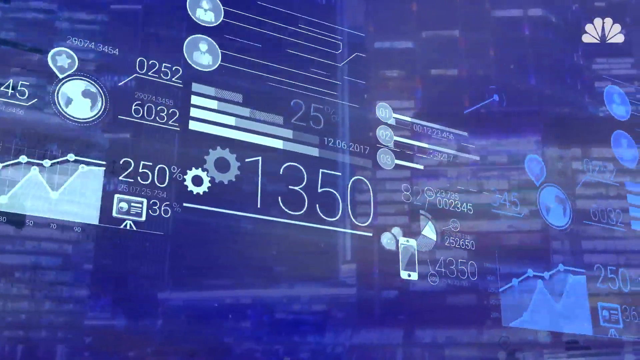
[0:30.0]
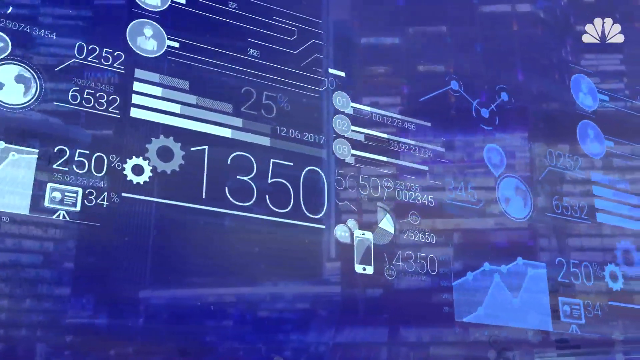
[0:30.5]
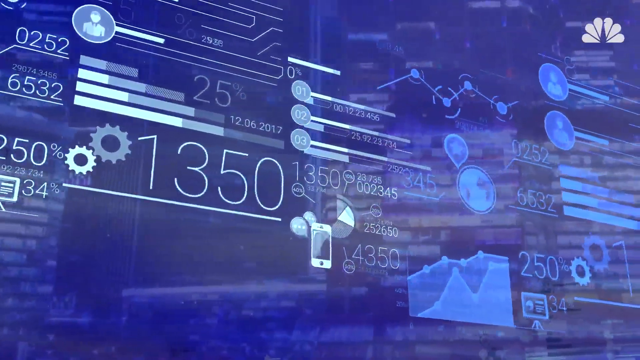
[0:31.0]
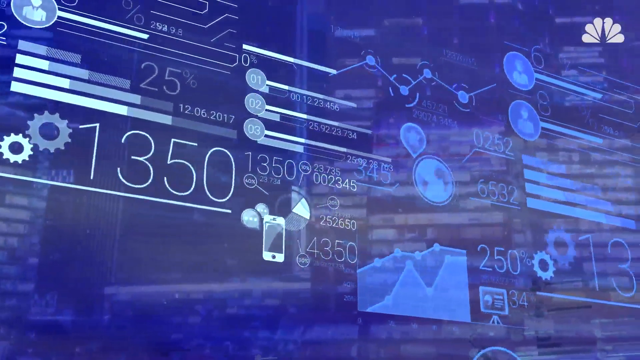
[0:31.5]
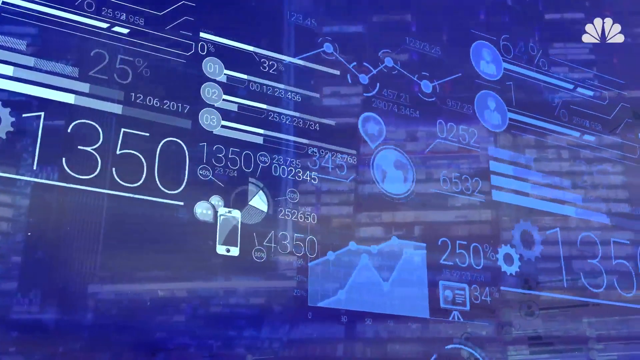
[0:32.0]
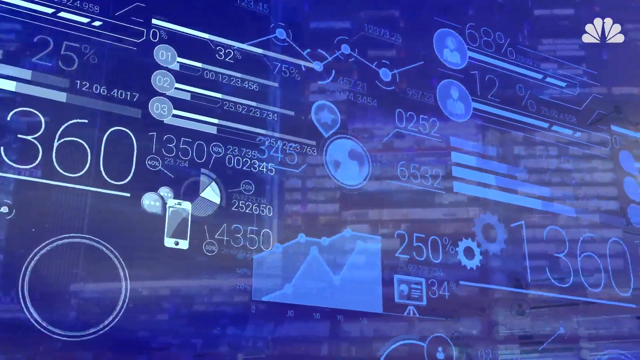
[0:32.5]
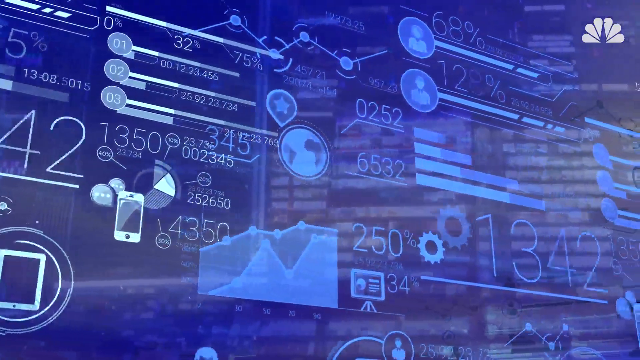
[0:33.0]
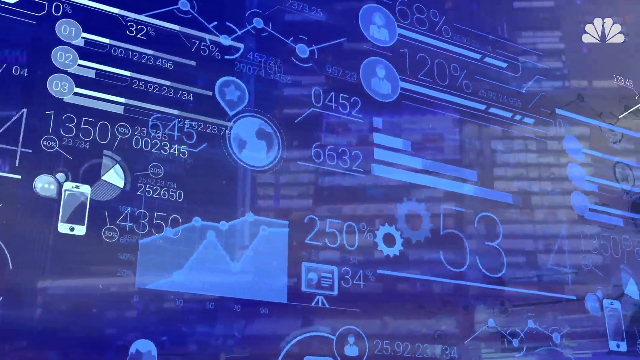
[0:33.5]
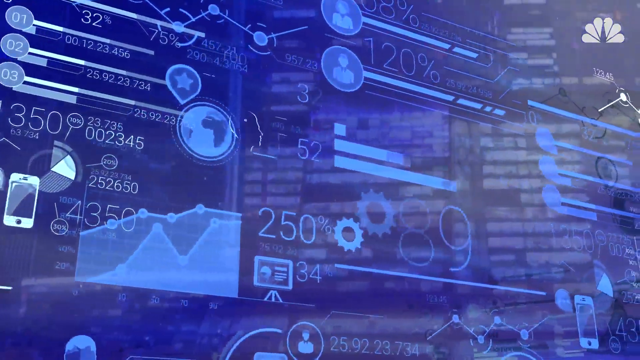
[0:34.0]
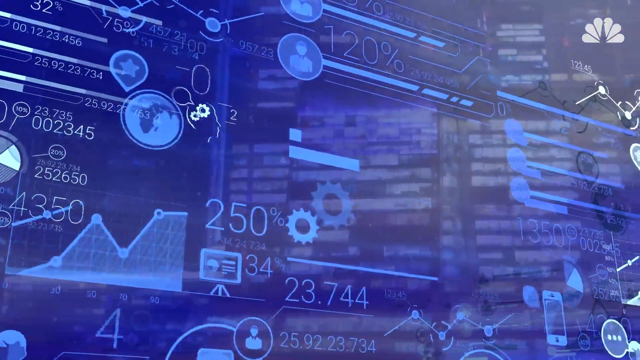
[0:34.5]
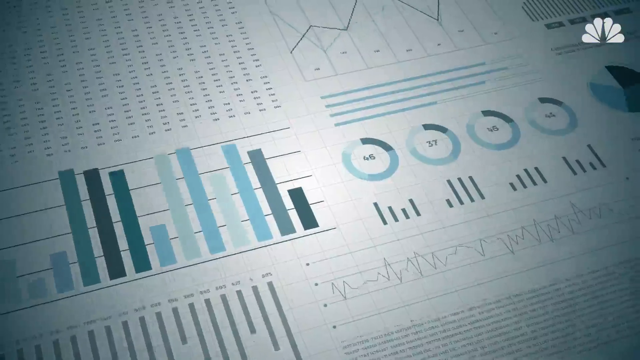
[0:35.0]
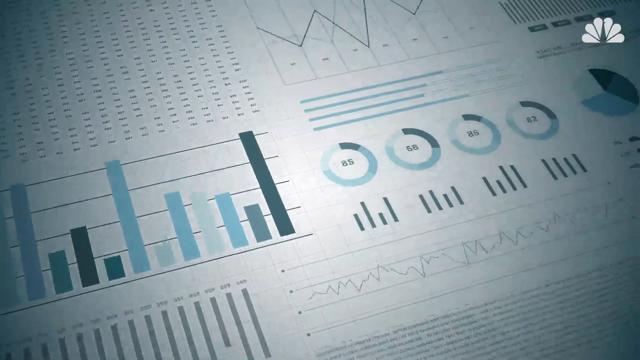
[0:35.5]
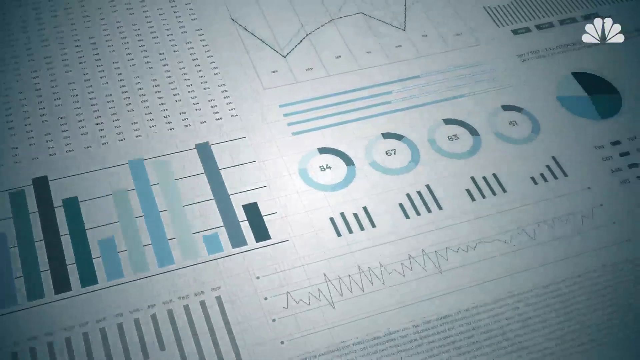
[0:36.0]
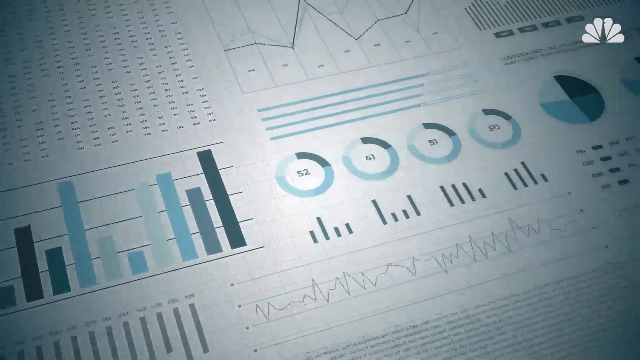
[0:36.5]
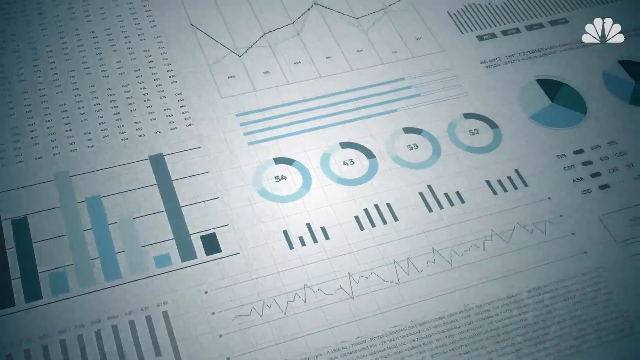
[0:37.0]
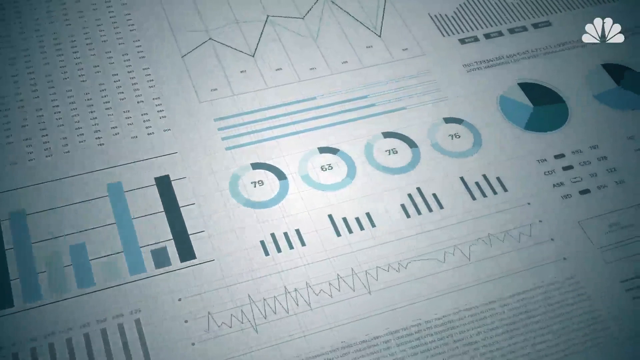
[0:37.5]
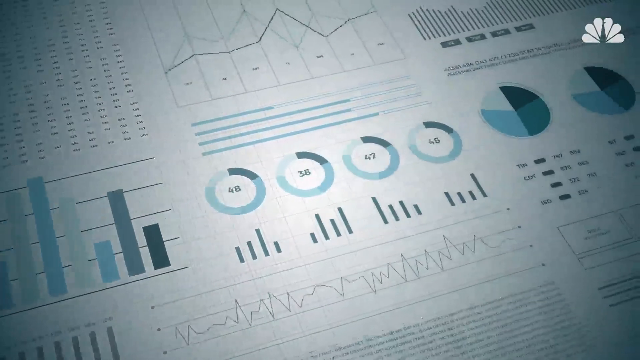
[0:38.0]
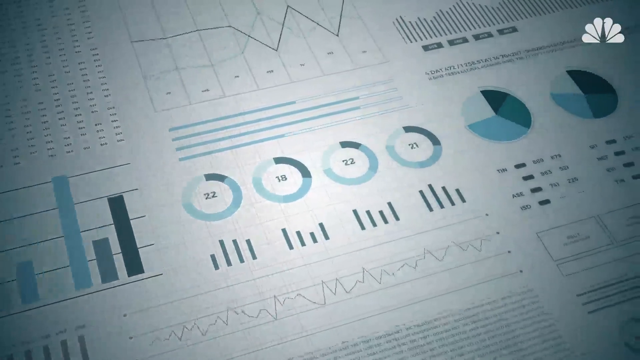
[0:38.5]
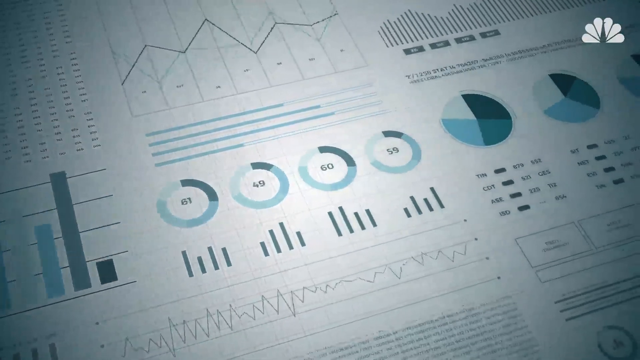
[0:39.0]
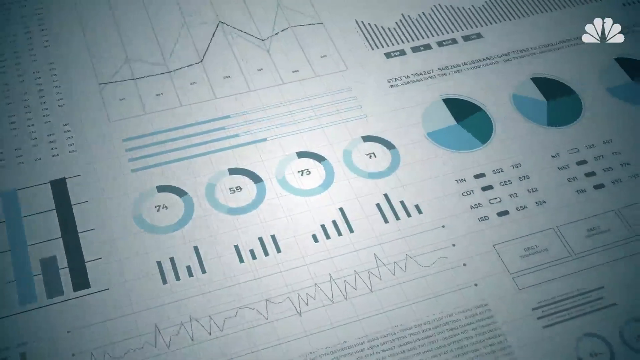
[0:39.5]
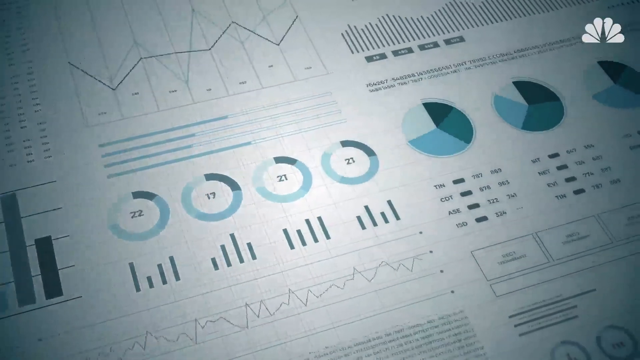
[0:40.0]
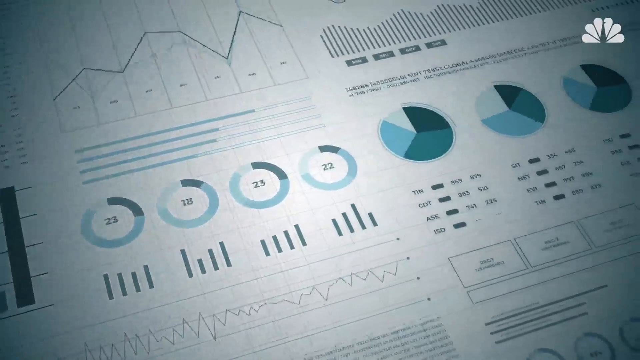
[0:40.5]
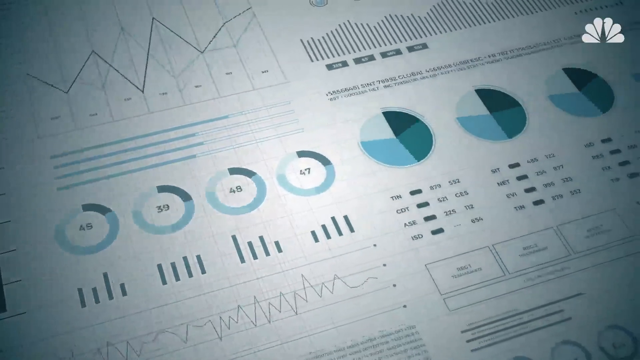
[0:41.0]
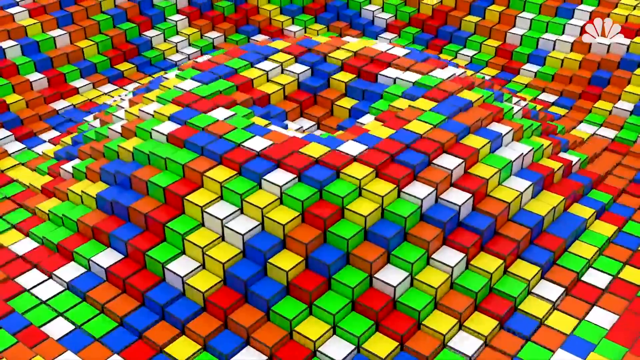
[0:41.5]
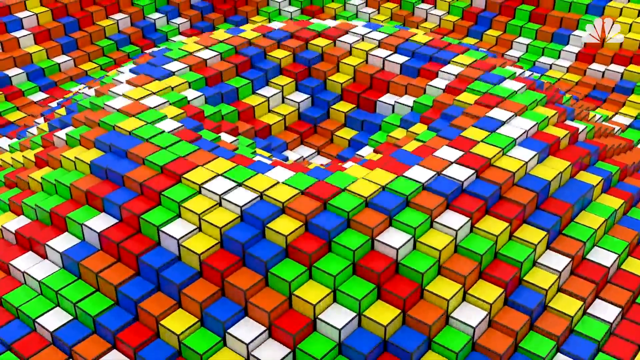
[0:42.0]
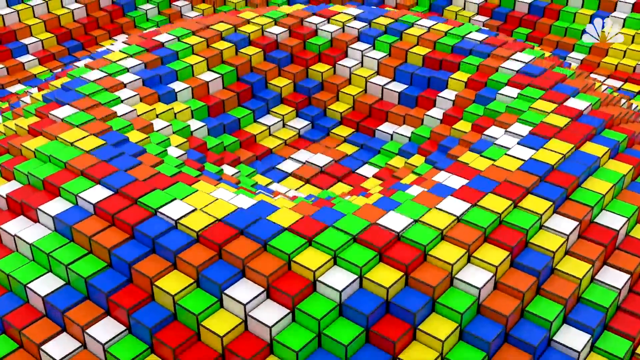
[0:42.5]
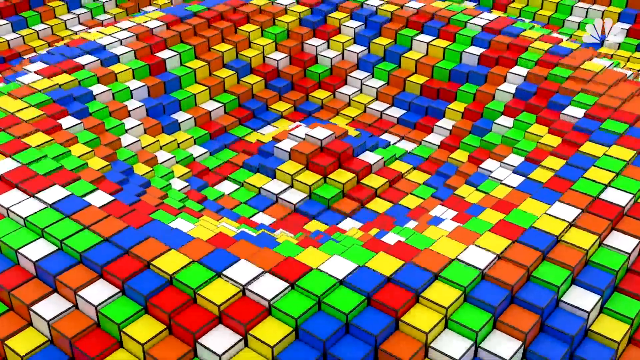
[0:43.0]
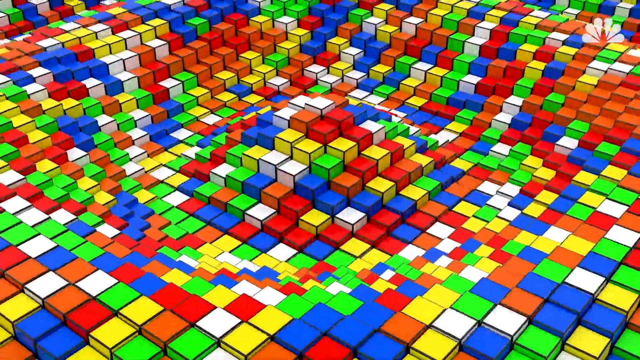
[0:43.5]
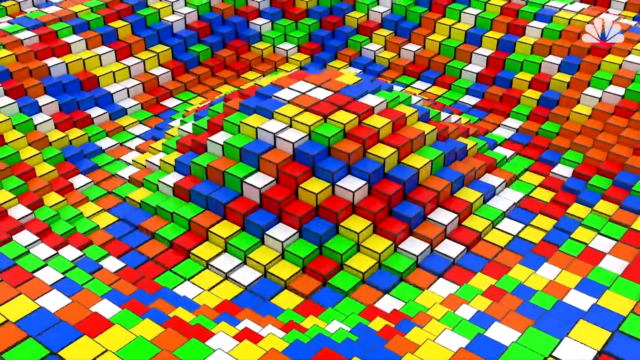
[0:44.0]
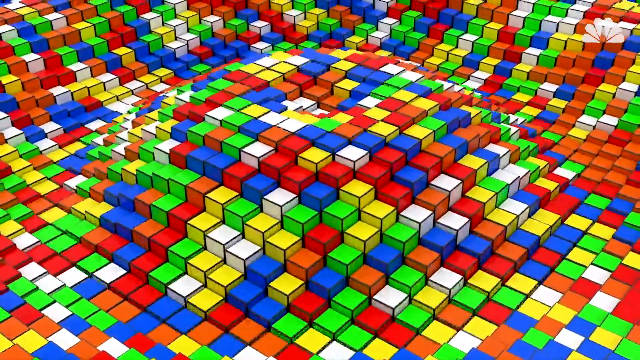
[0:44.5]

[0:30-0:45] A dark blue and light blue neon-looking ticker tape of numbers moves across the screen, along with graphs and charts. A different graphic follows in the same graph theme, moving in a similar way but with more of a white background and blue lettering, showing bar graphs, pie graphs, line graphs and data going across the screen. The graphs move: the pies rotate and the bars go up and down. The video then switches to the Rubik's Cube color scheme, a graphic of many little colored squares undulating like a wave, as if the whole surface were made of a Rubik's Cube, waving up and down.